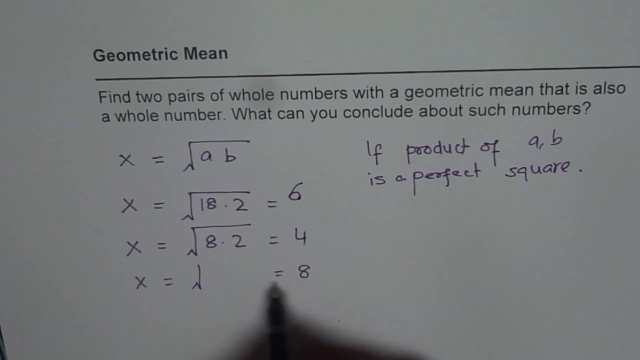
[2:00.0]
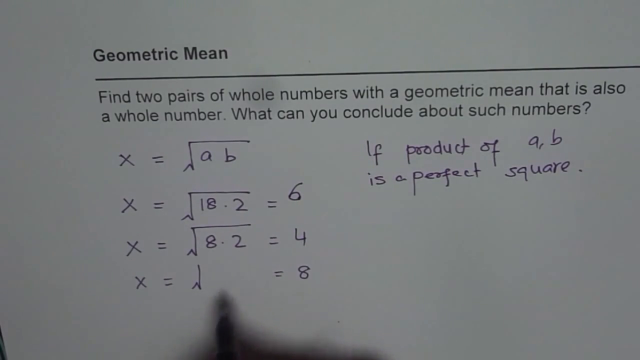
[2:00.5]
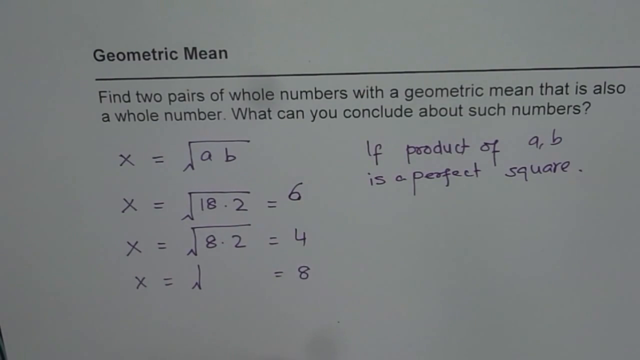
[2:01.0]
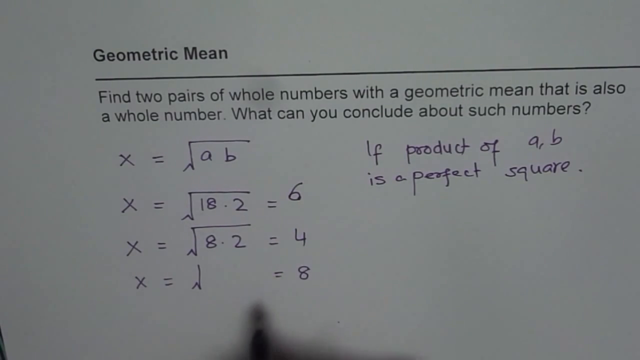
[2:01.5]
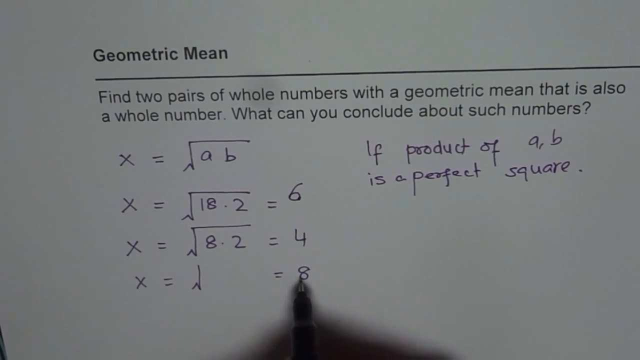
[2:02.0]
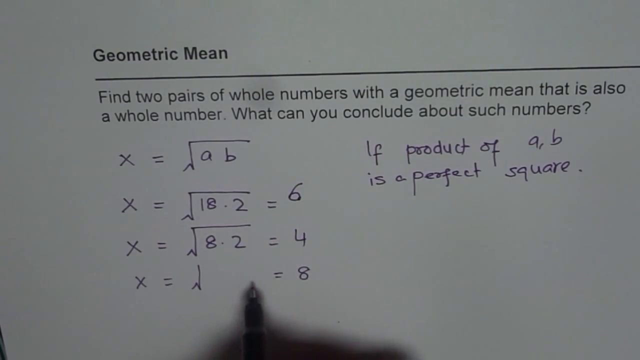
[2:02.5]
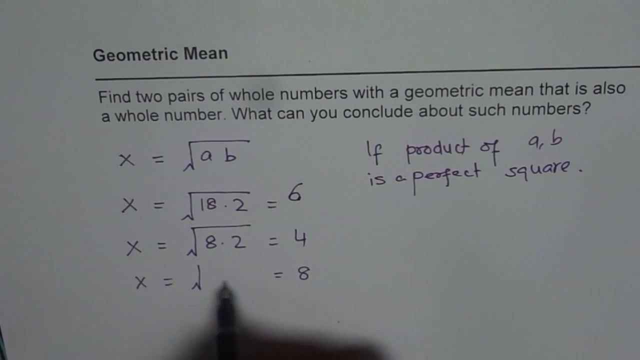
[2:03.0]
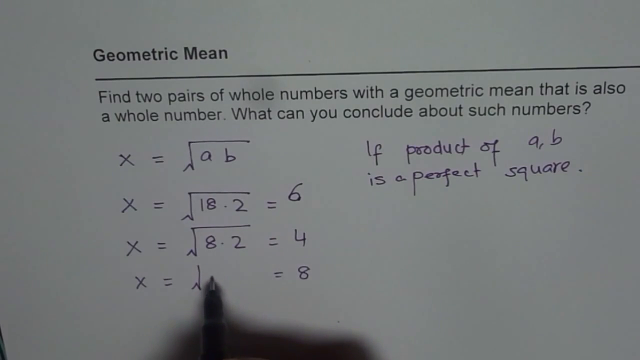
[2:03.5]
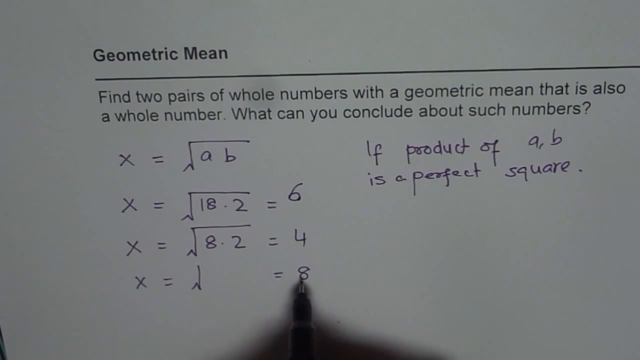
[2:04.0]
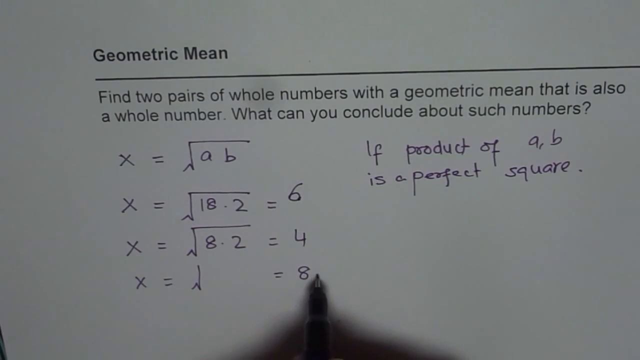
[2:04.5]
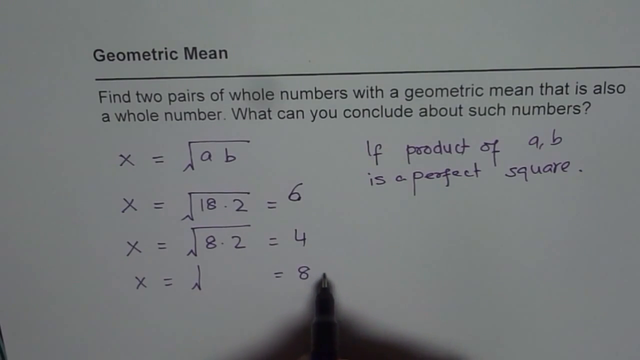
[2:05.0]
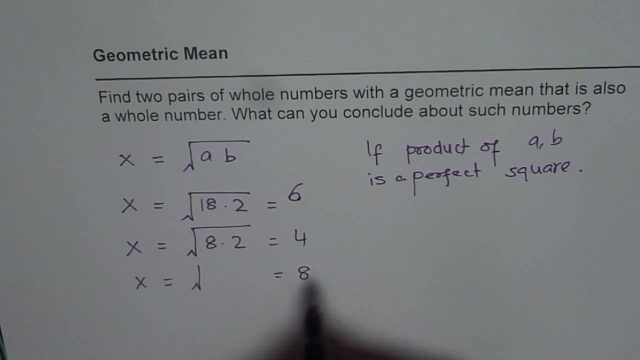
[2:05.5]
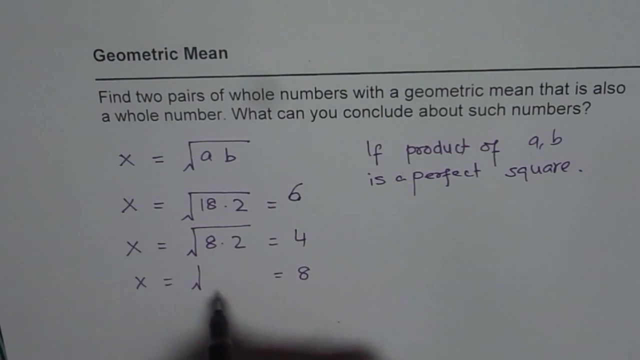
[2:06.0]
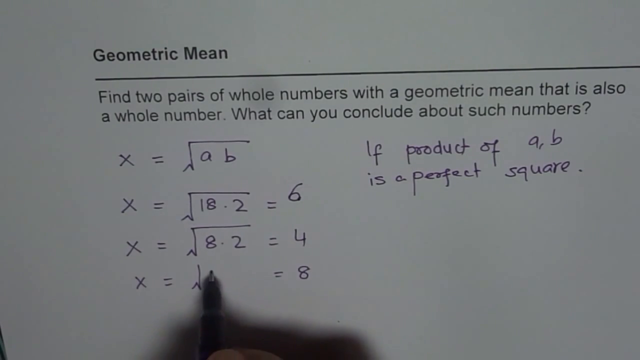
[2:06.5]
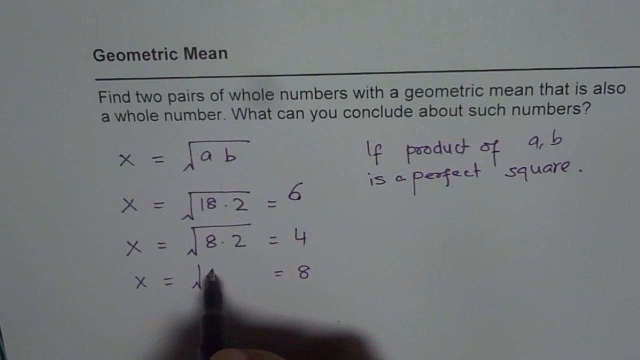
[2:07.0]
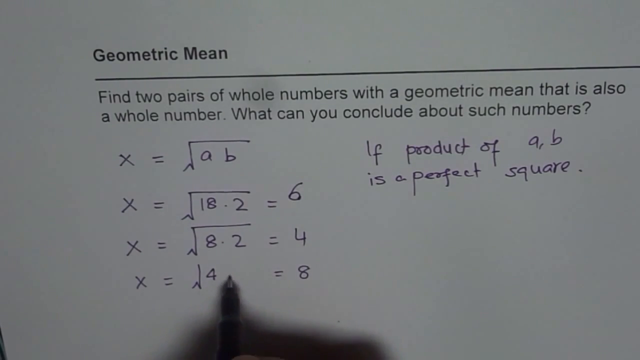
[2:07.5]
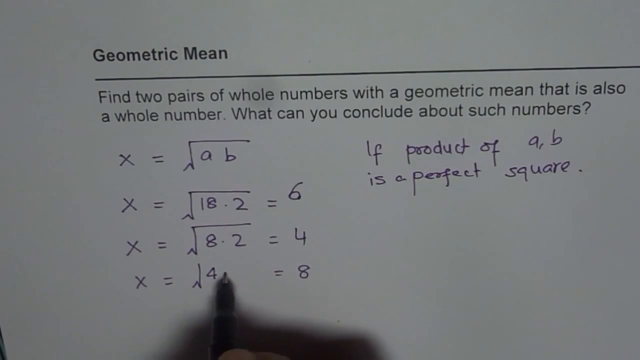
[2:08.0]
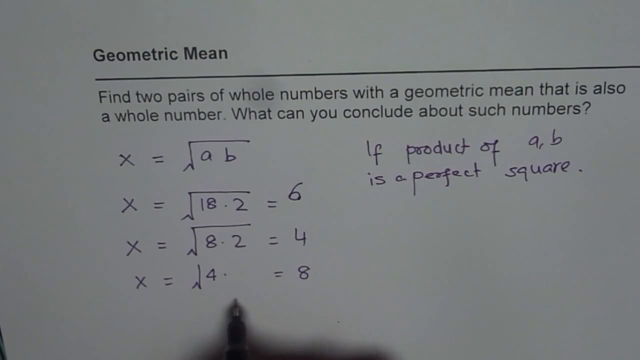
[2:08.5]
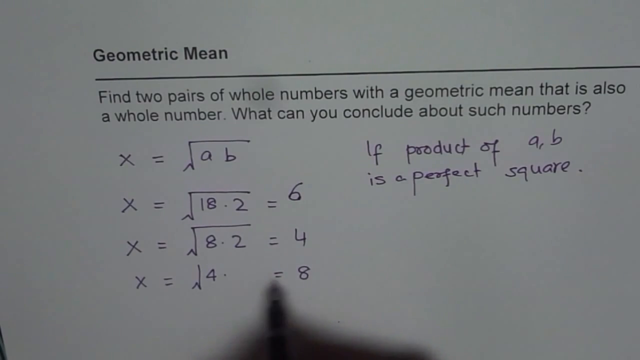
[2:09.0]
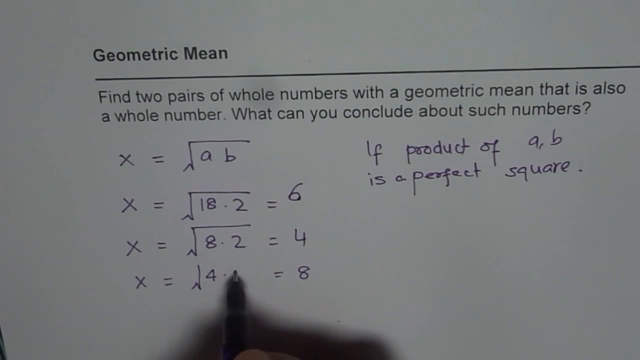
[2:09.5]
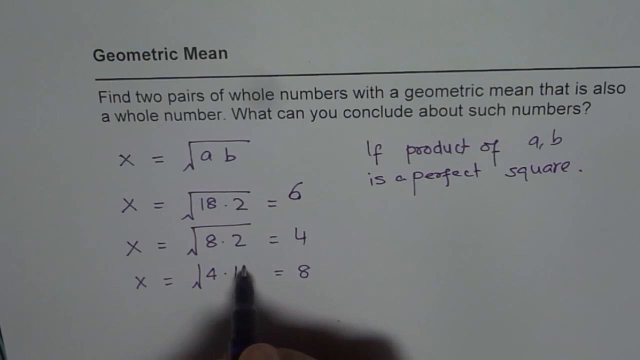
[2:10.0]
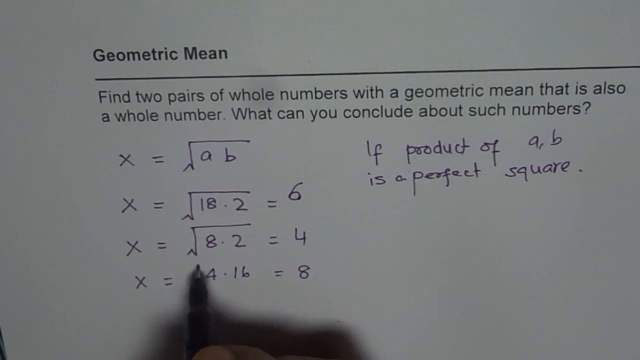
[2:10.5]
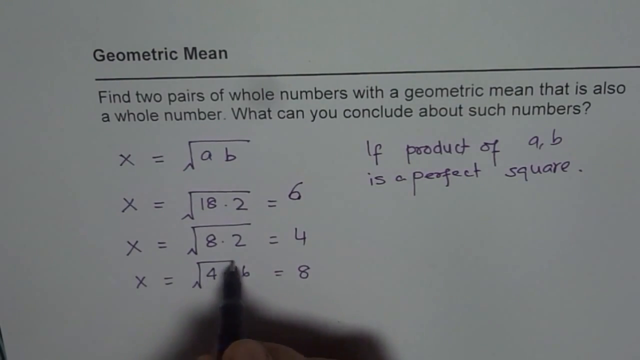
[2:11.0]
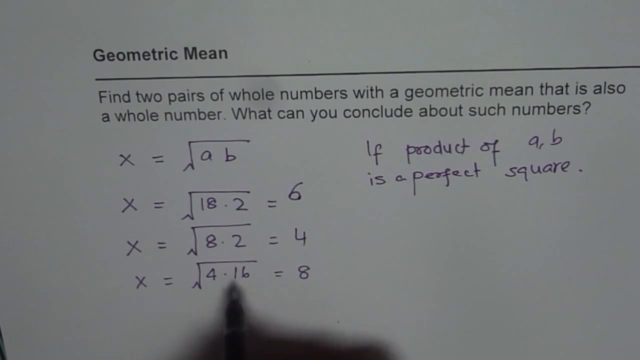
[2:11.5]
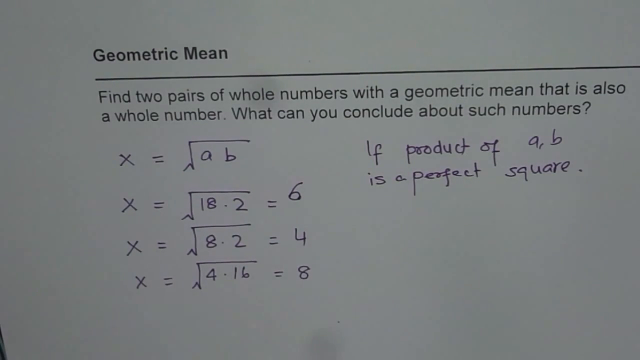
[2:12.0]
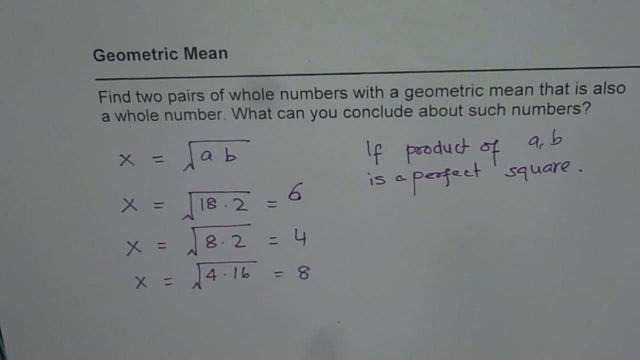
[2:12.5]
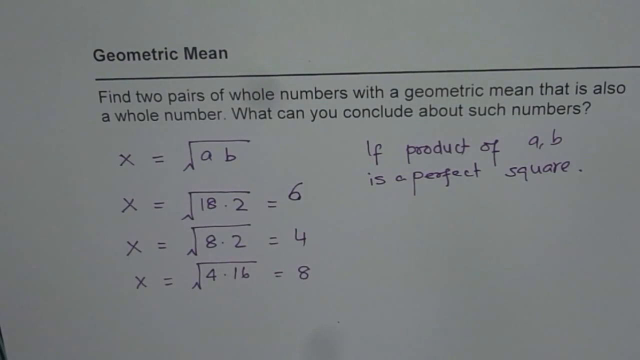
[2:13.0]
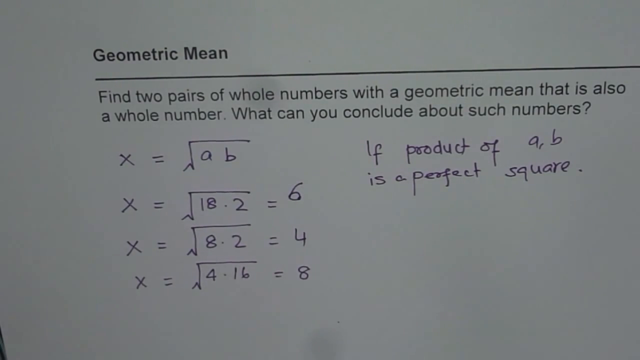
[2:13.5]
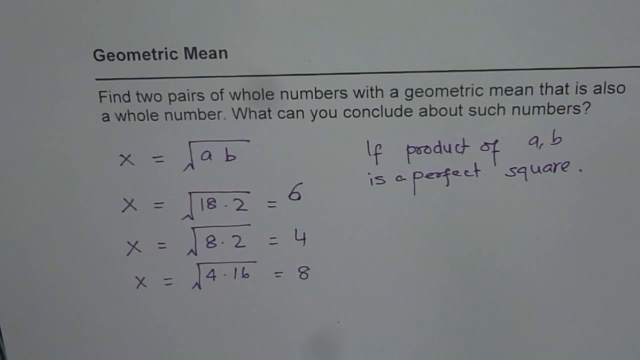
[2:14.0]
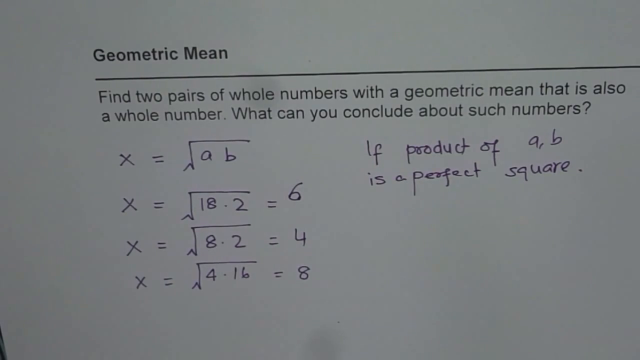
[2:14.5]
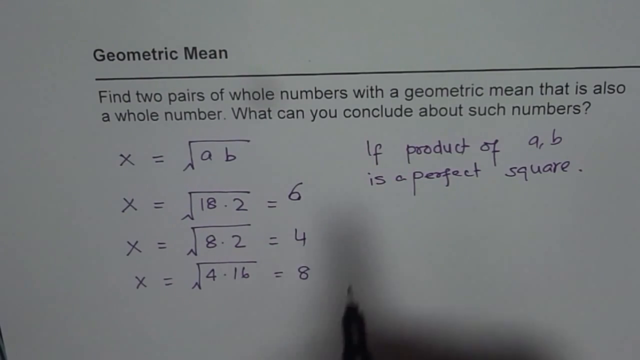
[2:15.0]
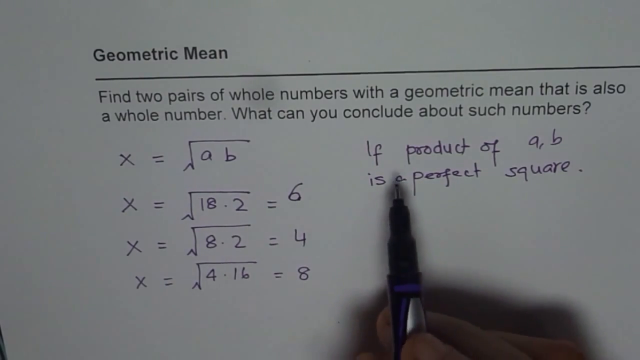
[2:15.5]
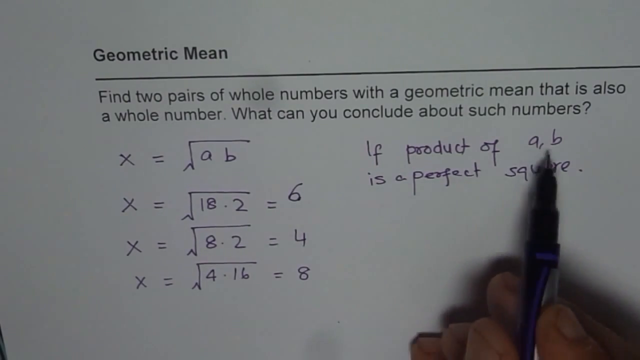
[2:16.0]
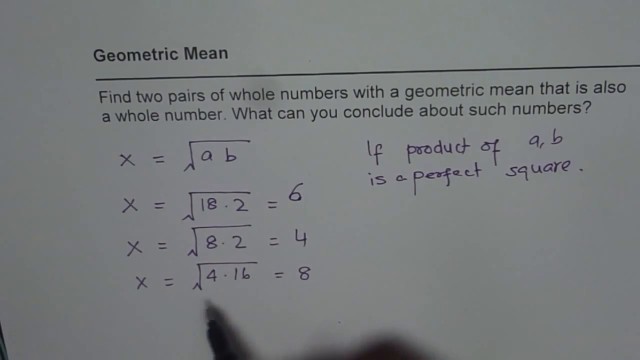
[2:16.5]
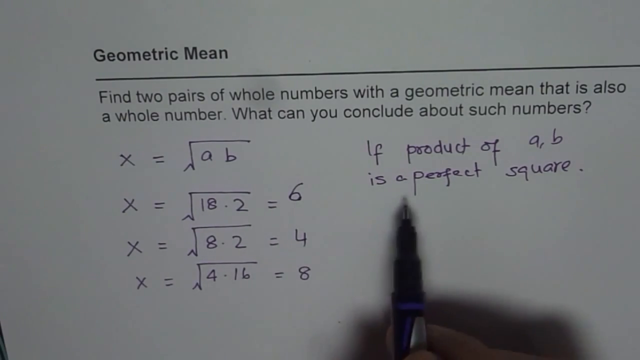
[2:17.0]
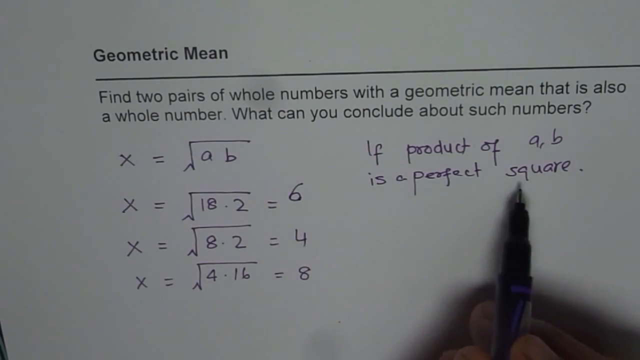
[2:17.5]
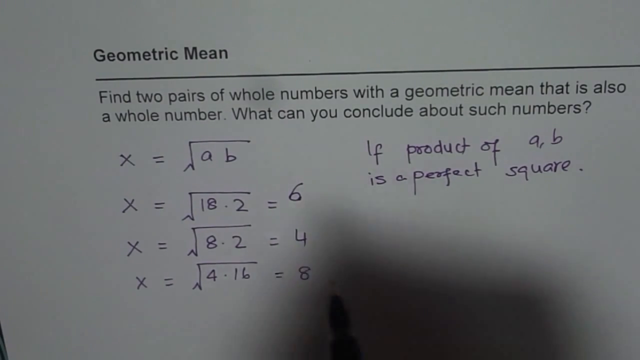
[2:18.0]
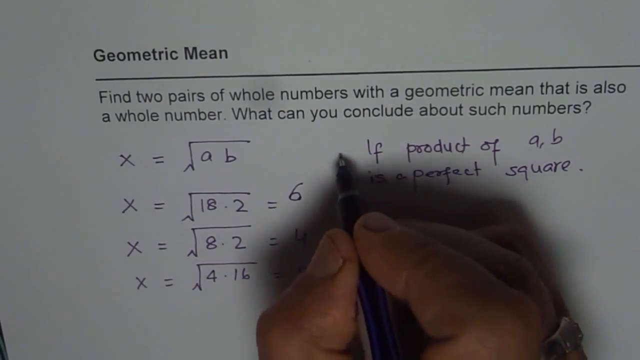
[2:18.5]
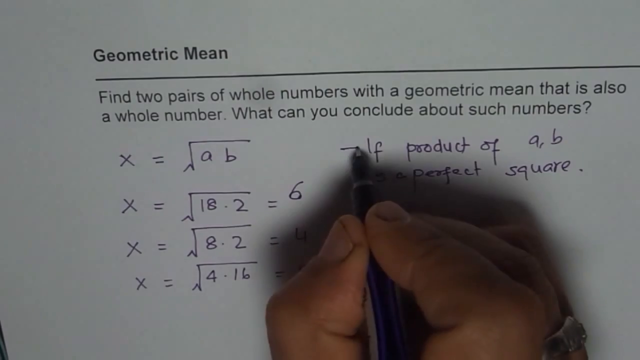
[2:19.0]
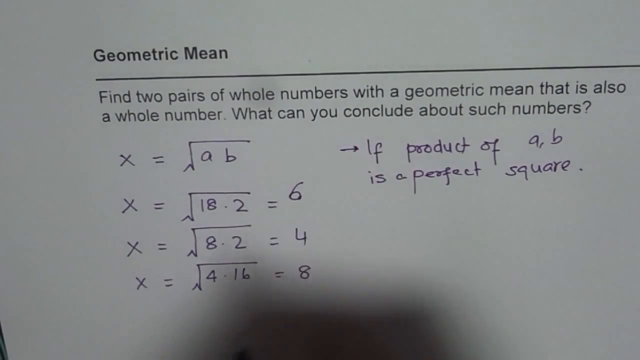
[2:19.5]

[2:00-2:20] The pen comes in, and he moves it back and forth between the blank spot in the division box, the equal sign and the 8. He sets the pen on the paper after the 8, brings it down and to the left and back up into the division box, writes 4.16, and finishes the division box. He brings the pen out of the camera view for a moment, then back up to the right where "if product of AB is a perfect square" is written, and taps on each word. He brings the pen back down to the 4 in the division box, goes back up and taps on the words "perfect square", draws a small arrow pointing at the word "if" in the words he wrote, and brings the pen back down to the 4 in the last division box he wrote.